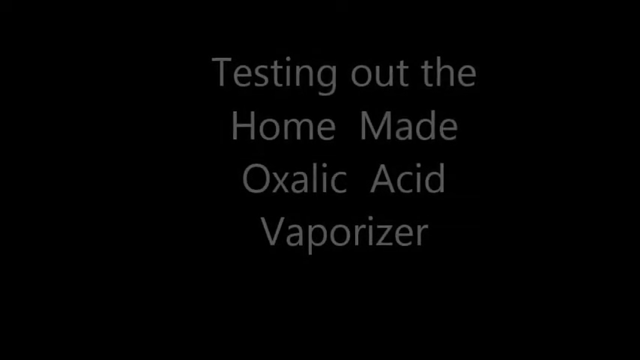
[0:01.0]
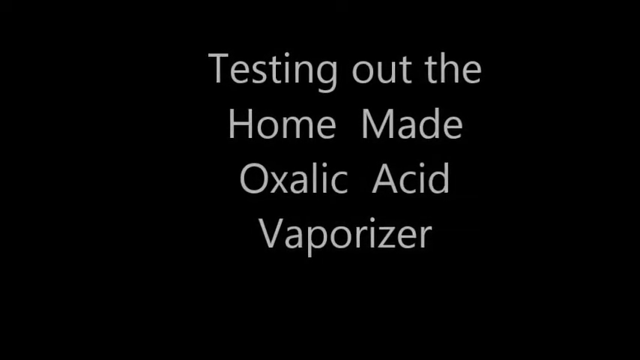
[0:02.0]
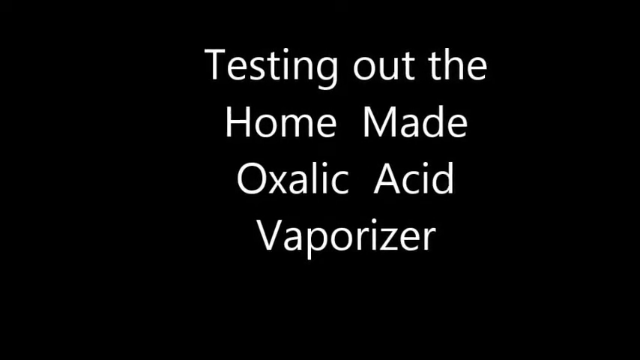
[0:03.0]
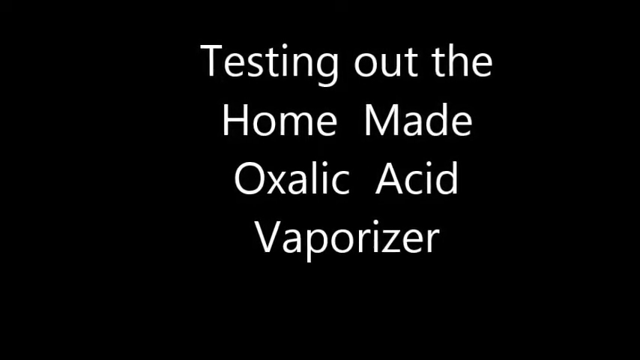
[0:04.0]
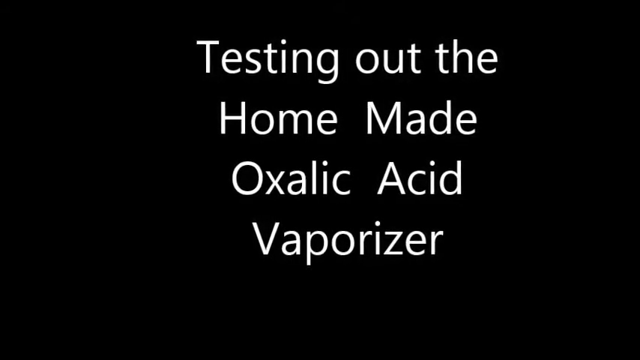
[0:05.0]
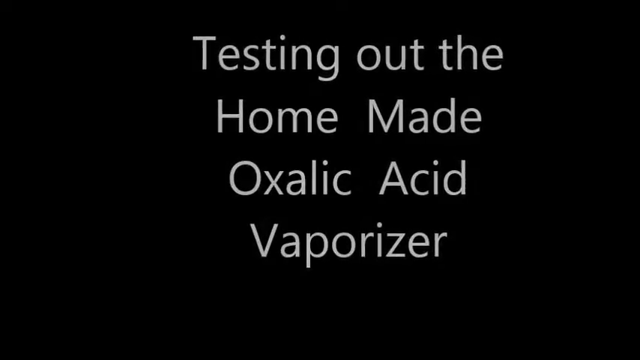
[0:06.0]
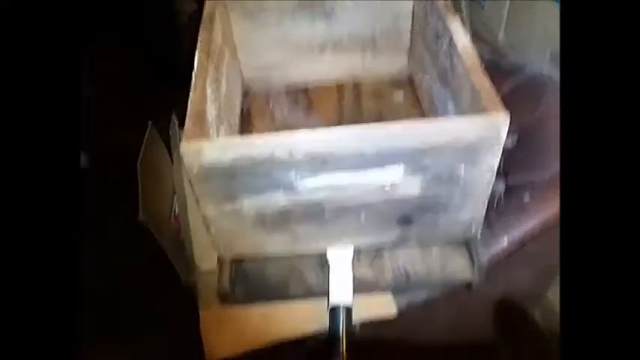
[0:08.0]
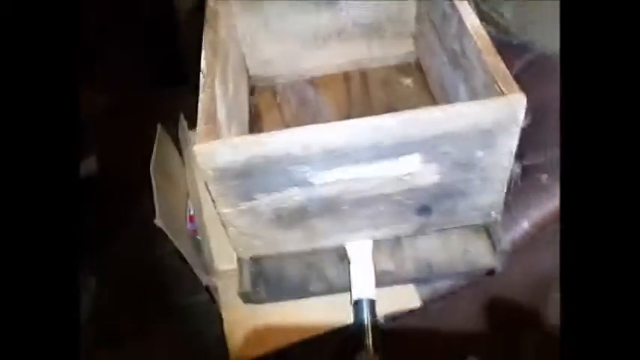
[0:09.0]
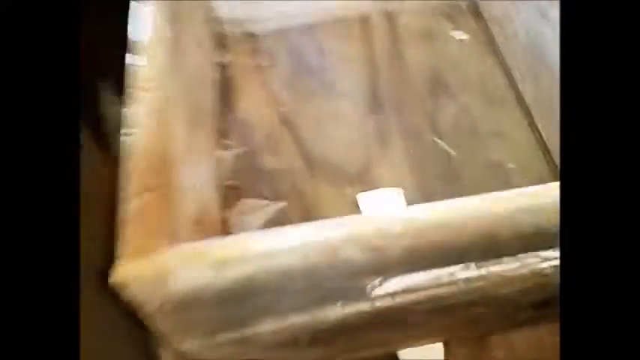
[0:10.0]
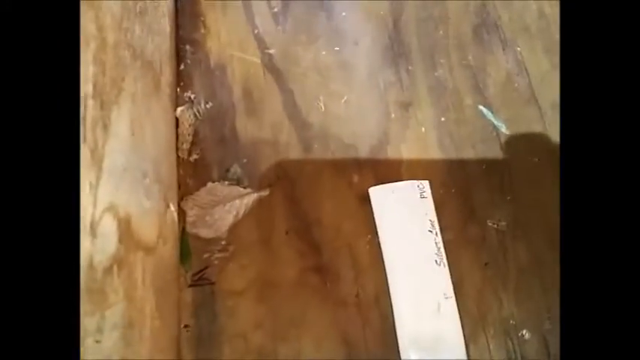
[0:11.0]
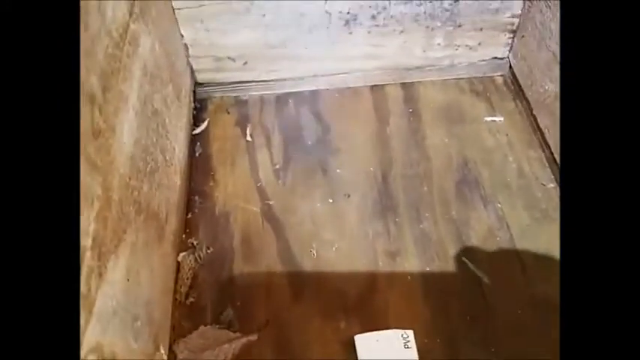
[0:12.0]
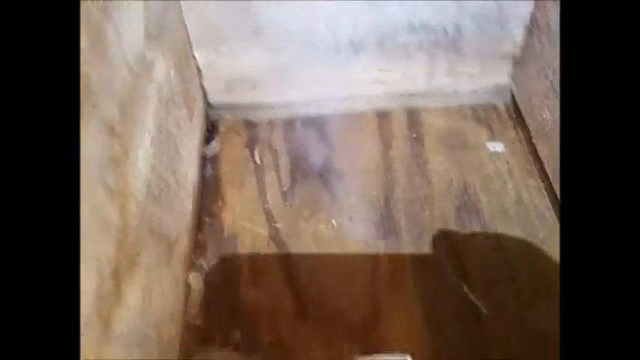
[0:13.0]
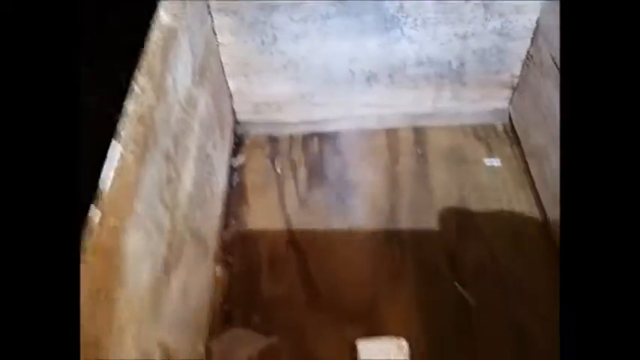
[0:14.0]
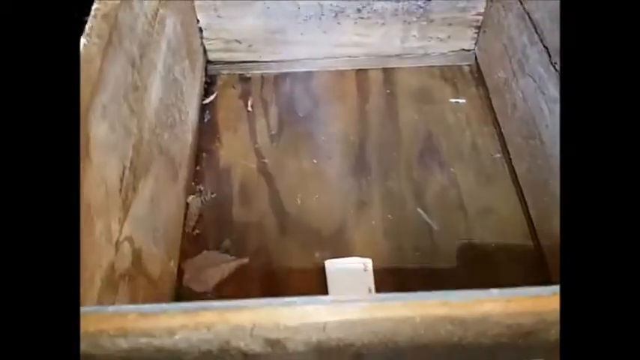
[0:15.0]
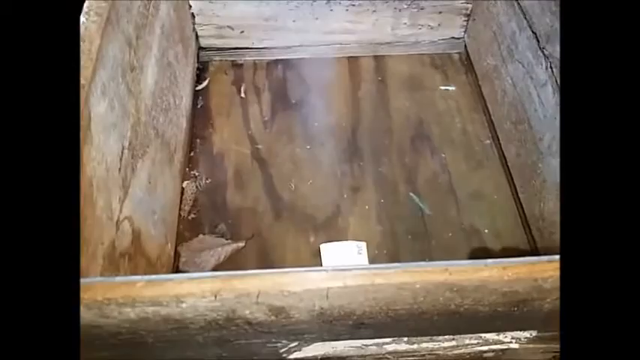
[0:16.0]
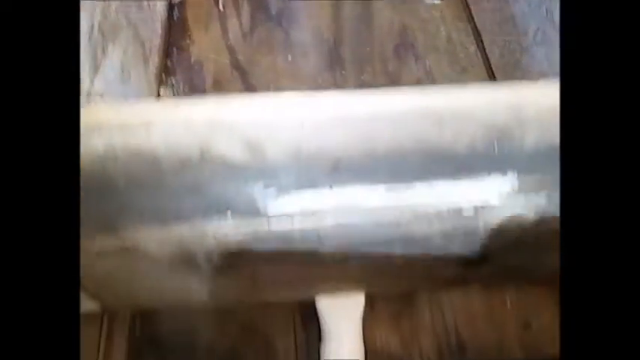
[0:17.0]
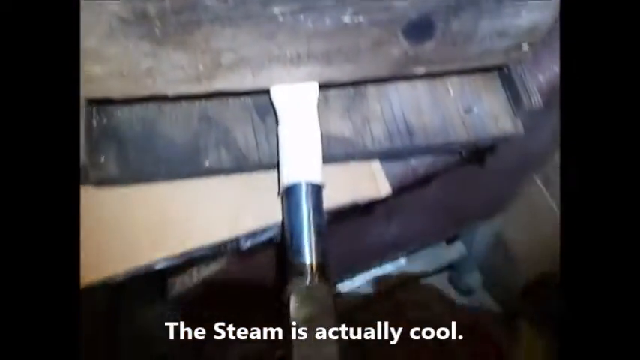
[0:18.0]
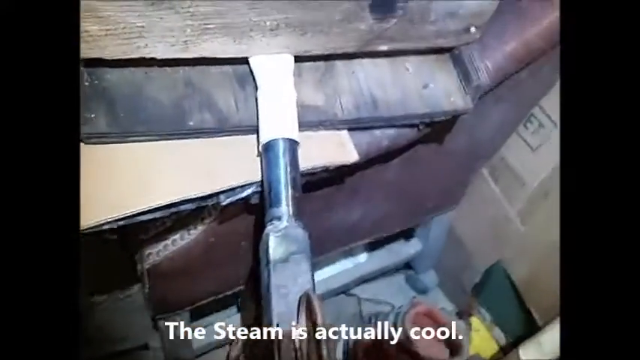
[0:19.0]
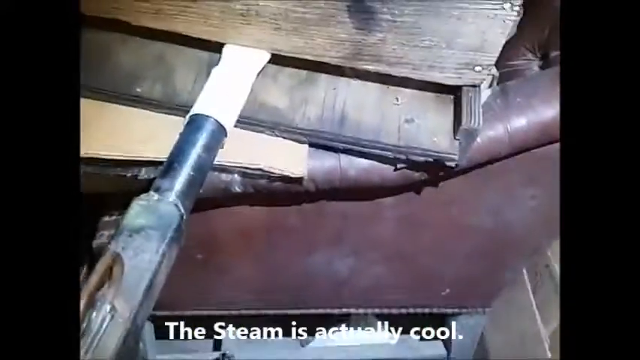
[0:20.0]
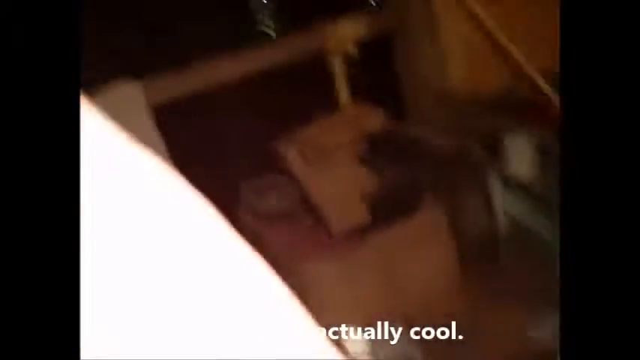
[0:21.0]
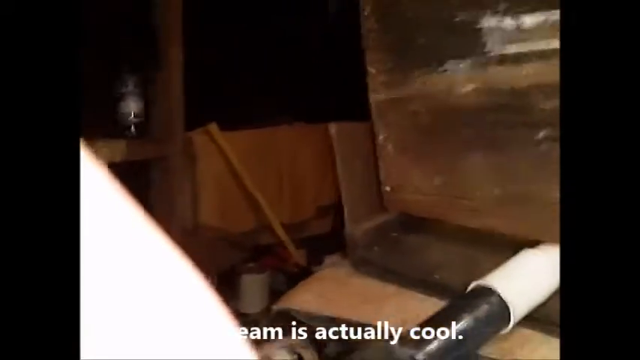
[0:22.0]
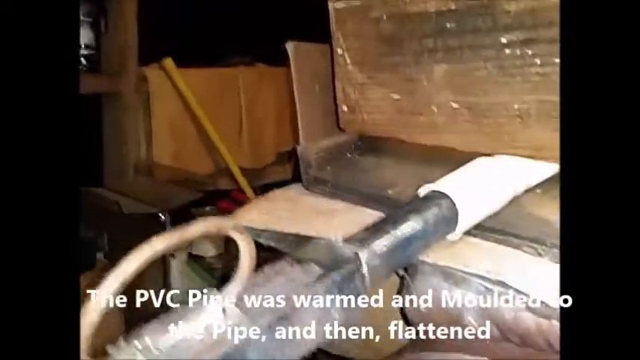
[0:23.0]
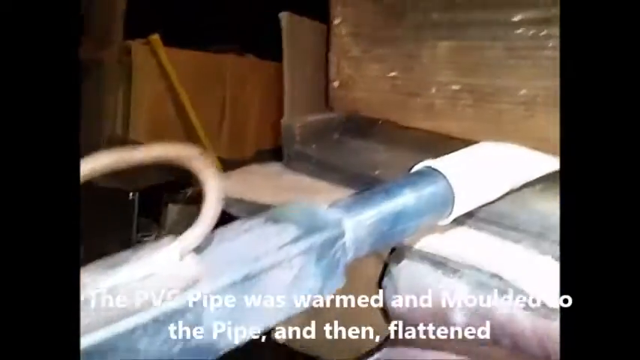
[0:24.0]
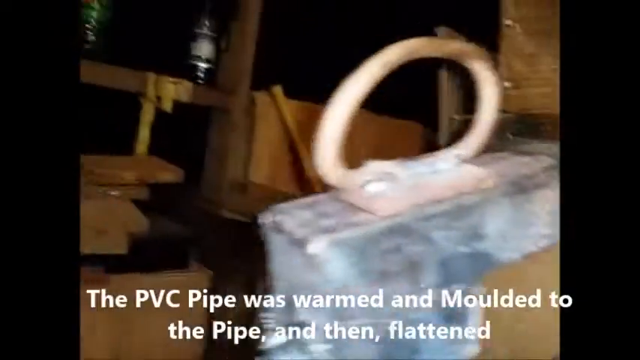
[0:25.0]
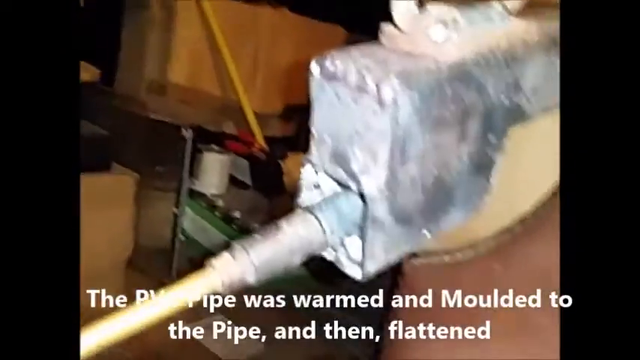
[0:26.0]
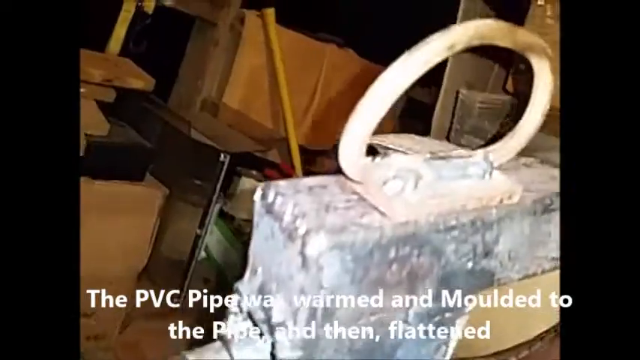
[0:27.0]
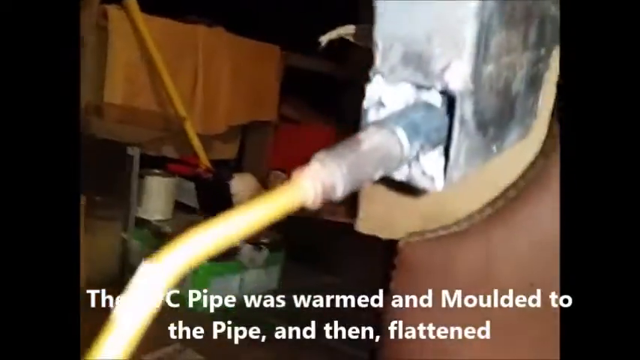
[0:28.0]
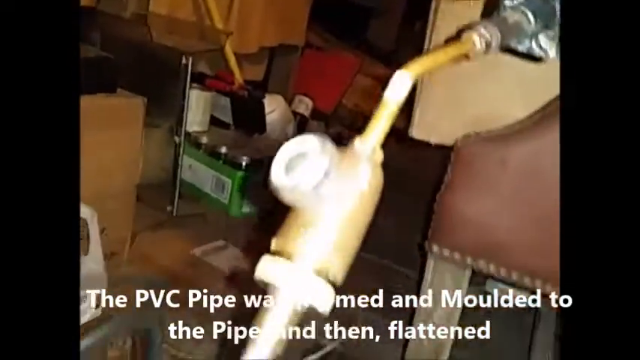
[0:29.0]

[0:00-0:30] A black screen displays the text "testing out the homemade oxalic acid vaporizer." A homemade video follows, showing what looks like a square homemade box of some sort with a base. Some type of contraption appears to go into it from a pipe or homemade device that is shooting steam. The video shows the device and what it is attached to. Subtitles run at the bottom of the screen, including "The PVC pipe was warm and molded" and "no fans or batteries needed with the rocket stove design." The floor is visible, with a jug on the floor to the left and multiple pieces of equipment. The camera moves very jerkily, making it hard to see what is being shown.